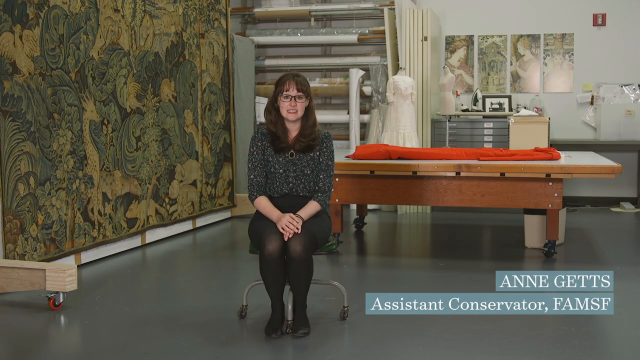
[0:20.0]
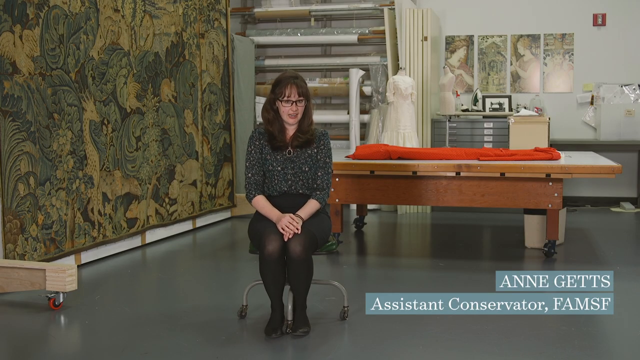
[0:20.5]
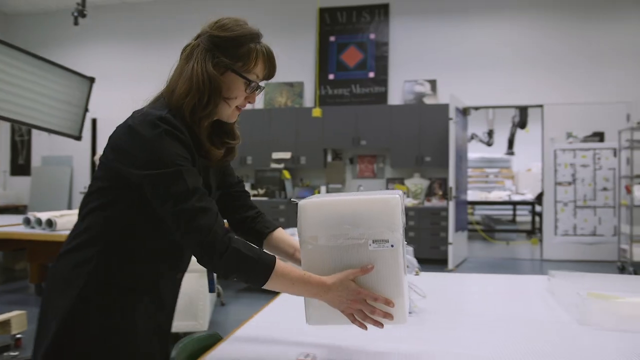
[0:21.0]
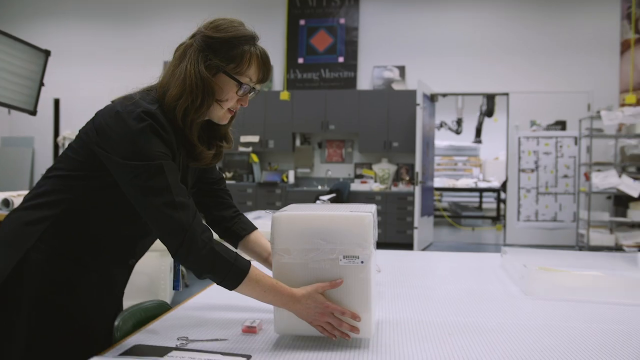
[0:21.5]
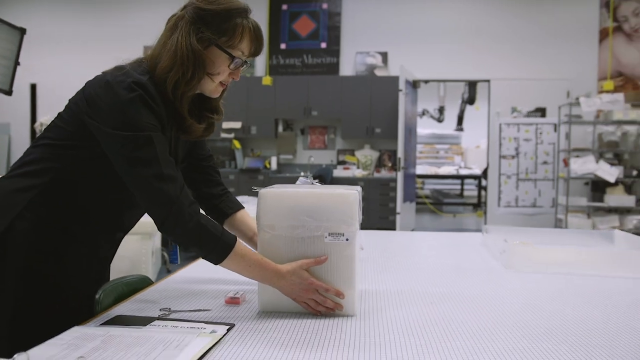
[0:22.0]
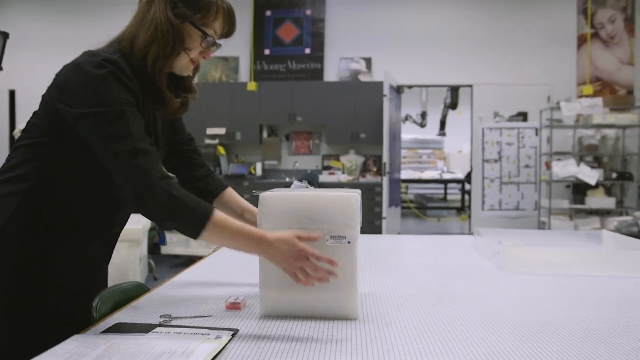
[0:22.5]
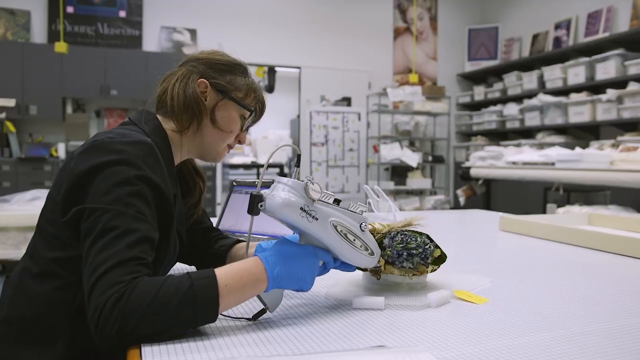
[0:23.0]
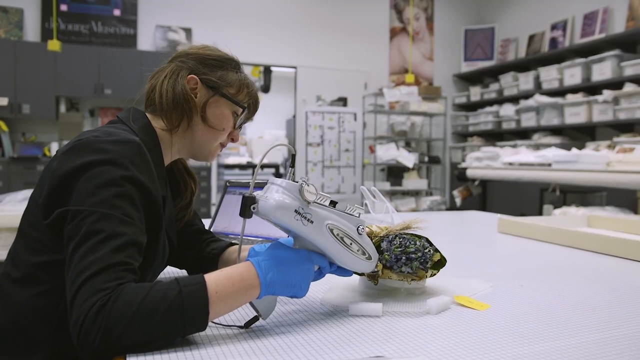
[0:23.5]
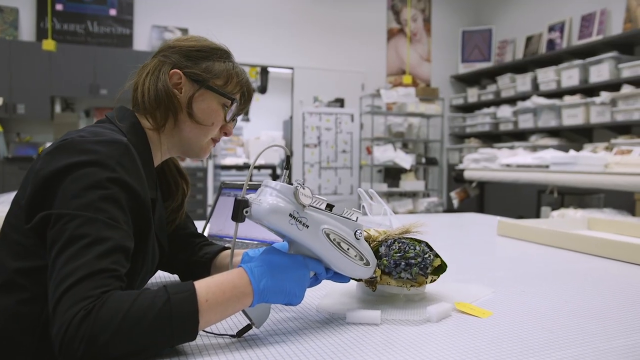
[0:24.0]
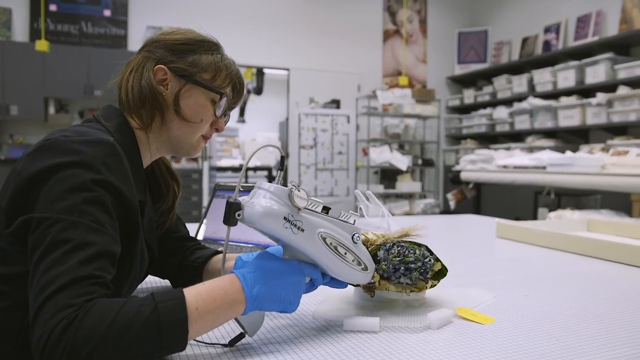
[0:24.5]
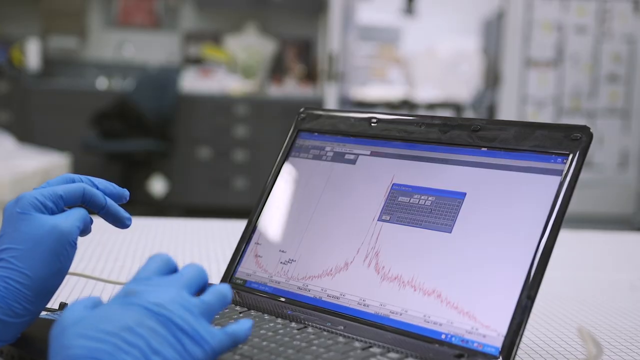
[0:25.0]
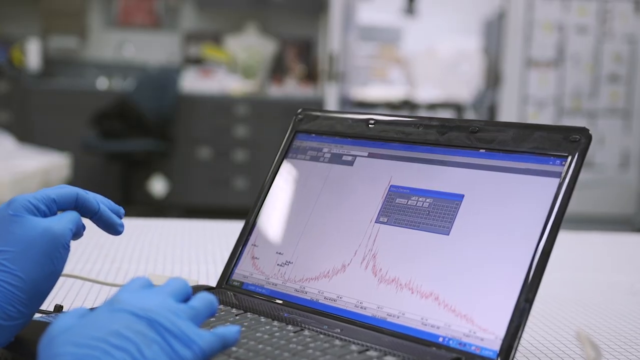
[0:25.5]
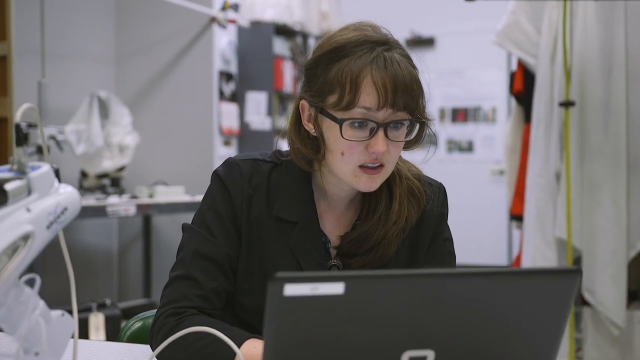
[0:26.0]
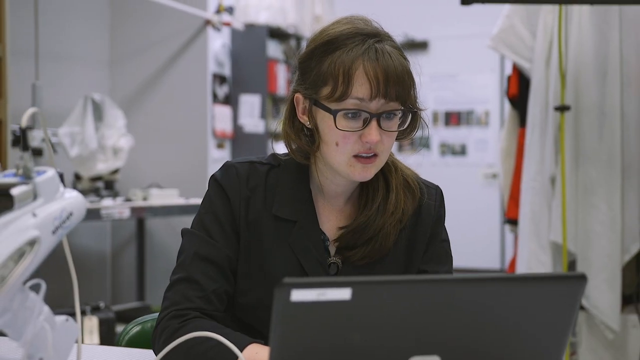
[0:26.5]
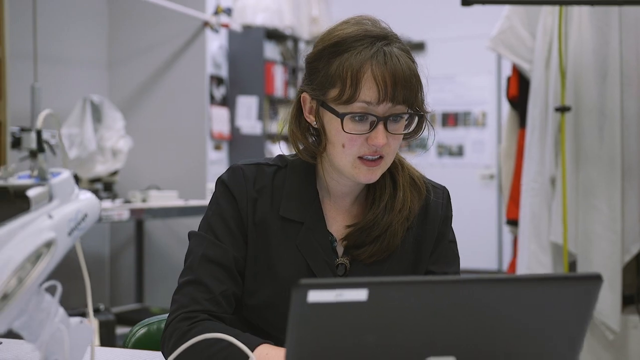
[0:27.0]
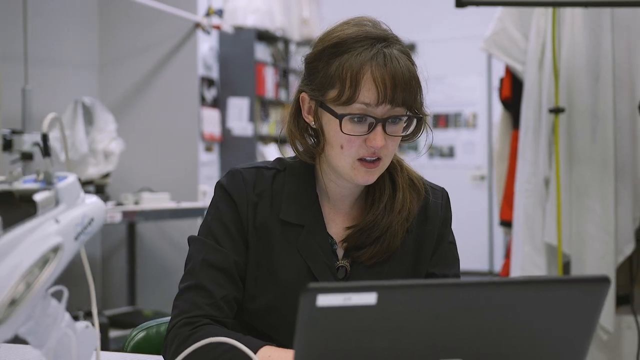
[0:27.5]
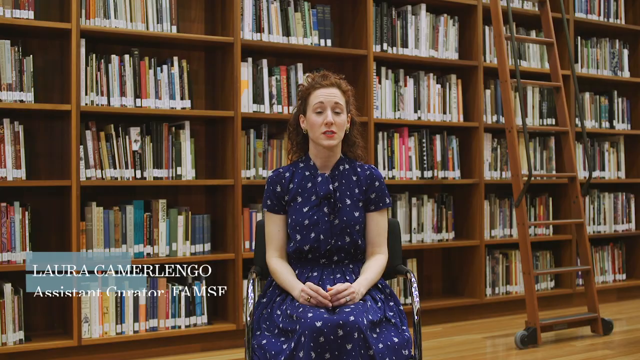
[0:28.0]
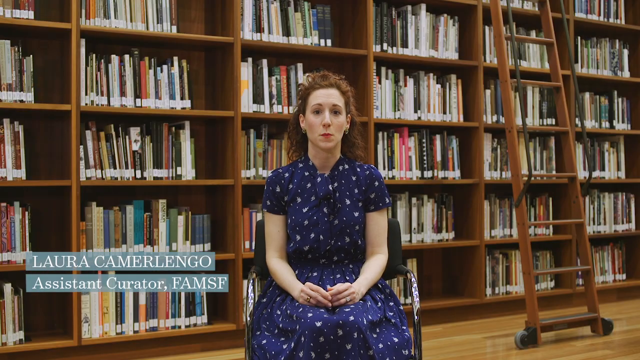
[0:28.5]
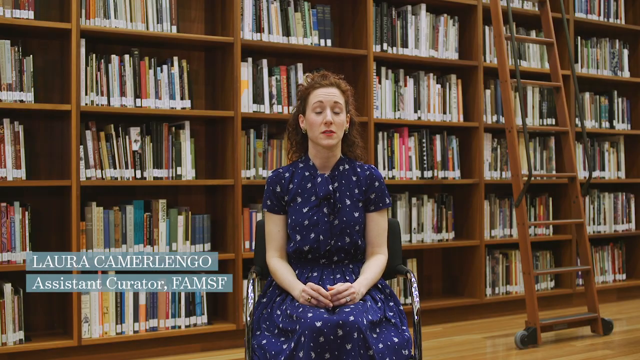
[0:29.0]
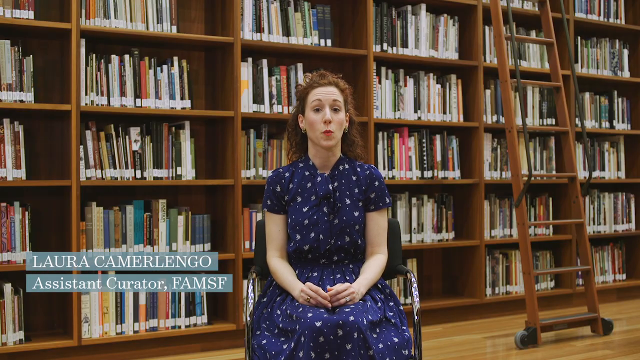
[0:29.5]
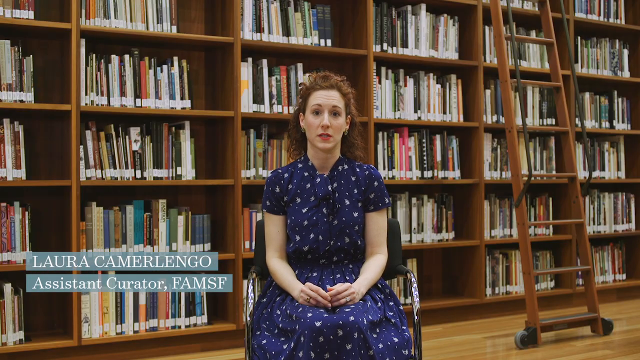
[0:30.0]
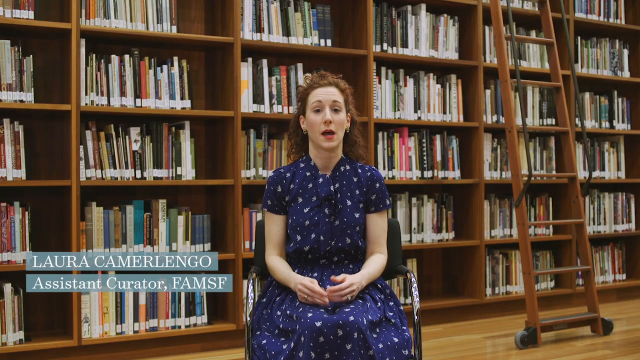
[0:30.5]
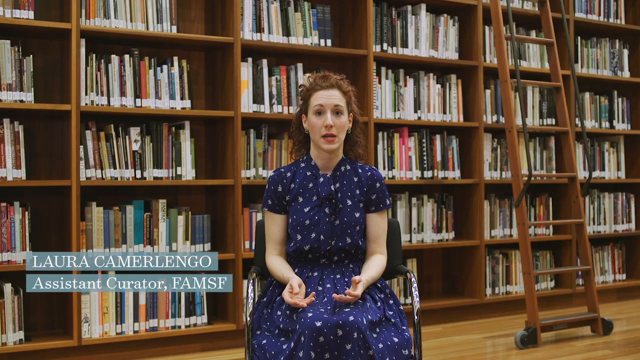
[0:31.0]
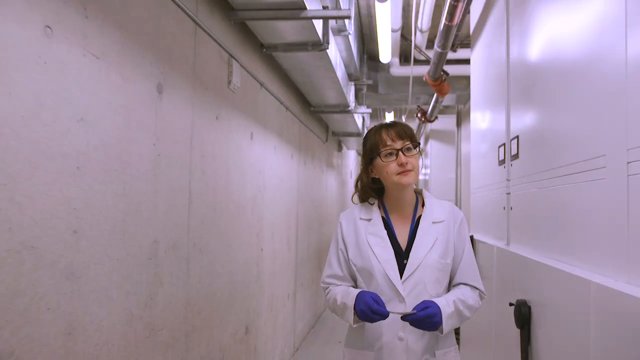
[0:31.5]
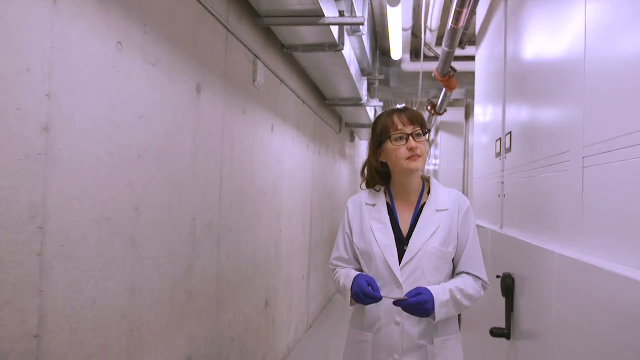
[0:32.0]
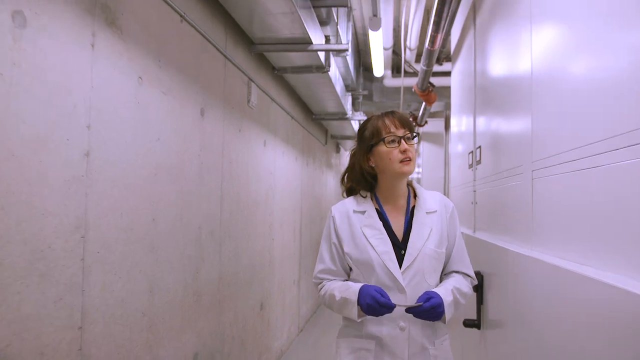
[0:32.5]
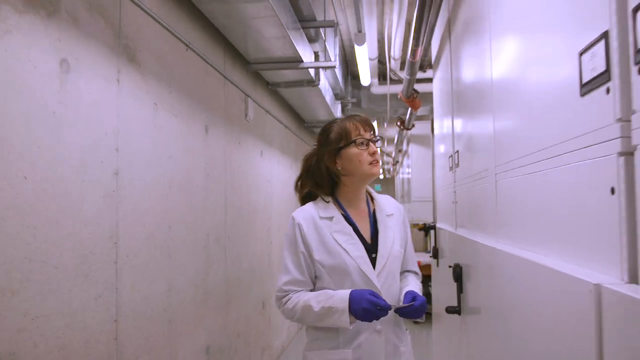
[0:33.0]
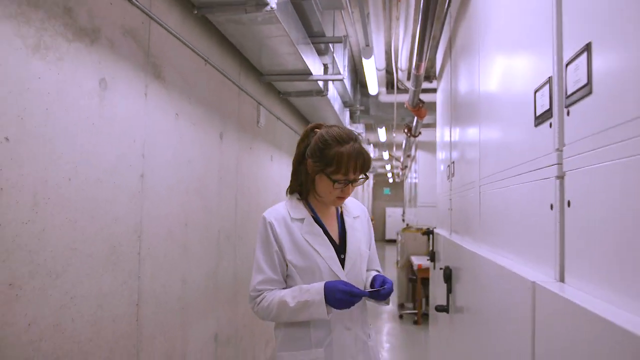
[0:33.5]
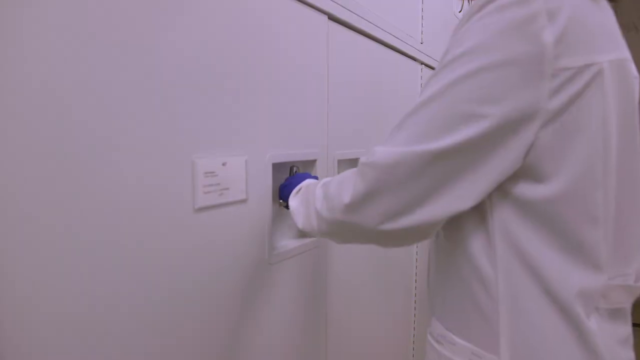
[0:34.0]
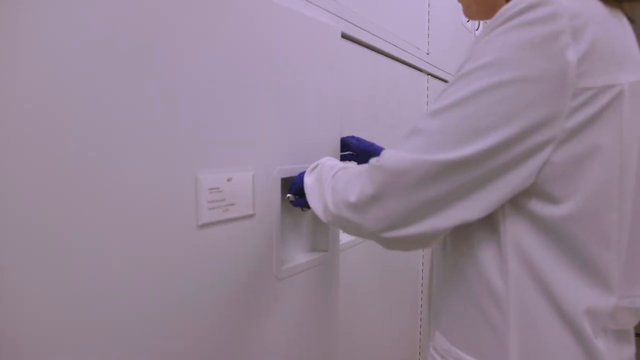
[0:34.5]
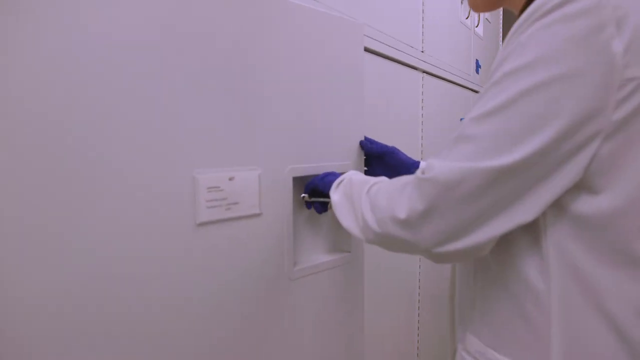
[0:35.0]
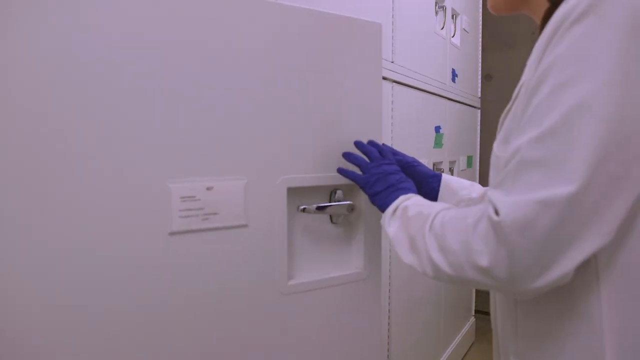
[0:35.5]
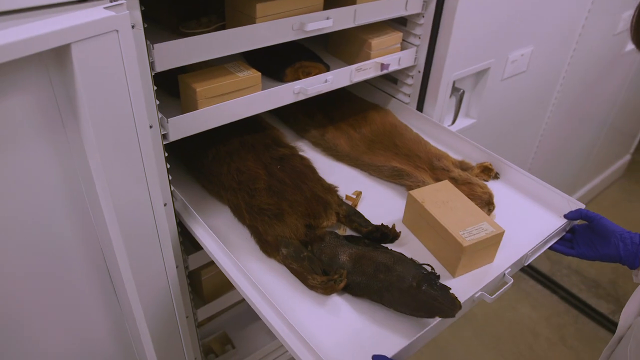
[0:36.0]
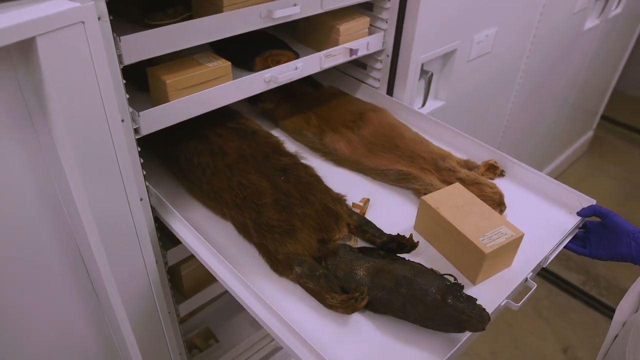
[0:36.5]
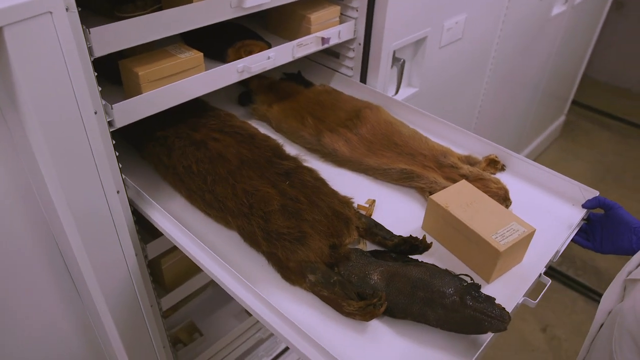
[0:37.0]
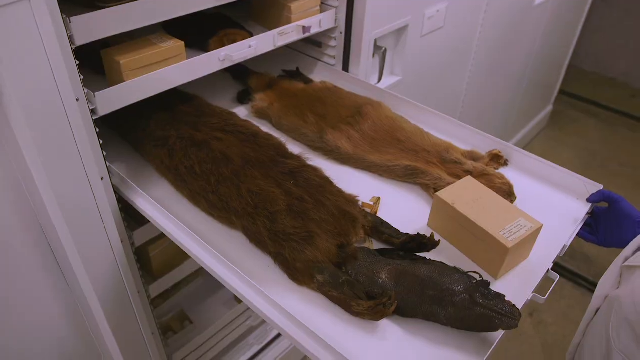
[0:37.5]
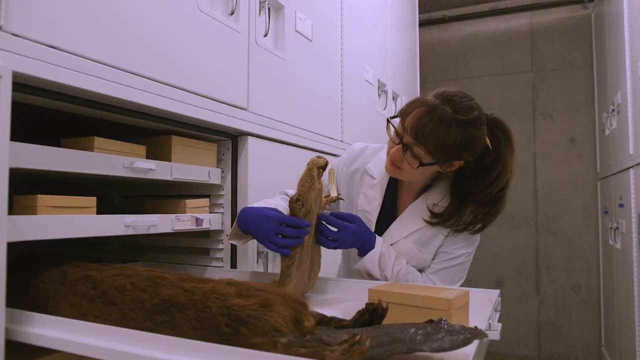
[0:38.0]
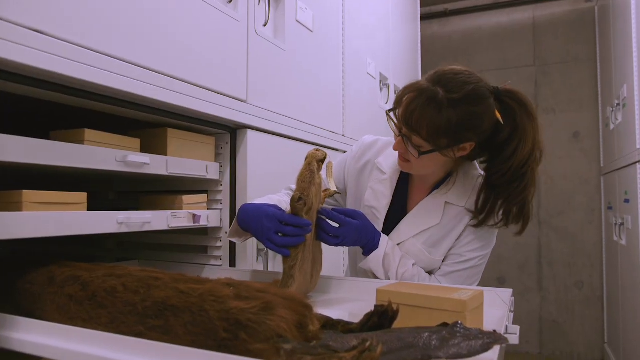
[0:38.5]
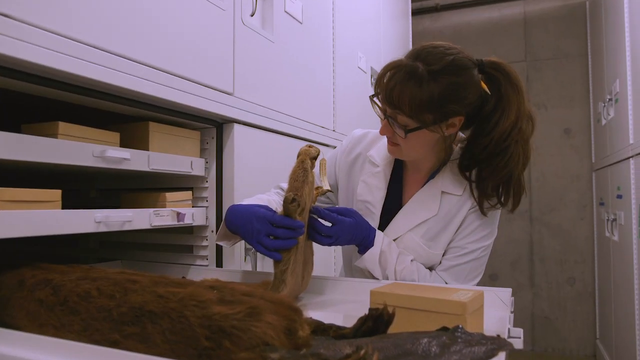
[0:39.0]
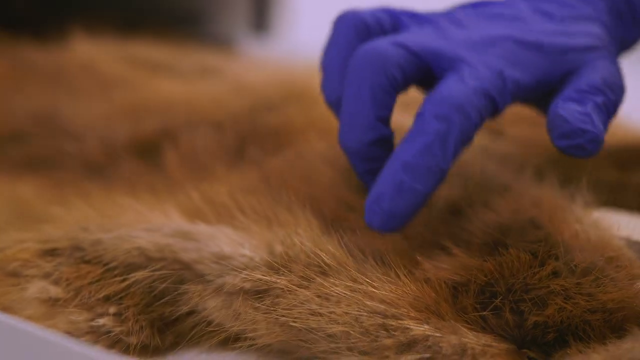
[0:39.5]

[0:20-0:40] Anne Getz is briefly shown in the room, and then she is in a different room; she is a textile conservator. She places something on a white table and uses a tool to cut something. It cuts to her using a laptop to make a graph. Then it cuts to another woman in a library with bookshelves behind her: Laura Camerlengo, an assistant curator at FAMSF. She wears a navy blue dress and sits on a black chair. It cuts back to Anne Getz walking down a hallway of what seems to be a laboratory or museum room. She takes something out of the collections, pulling out a tray that holds what looks like old fur or pelts of fur preserved in this museum storage facility.